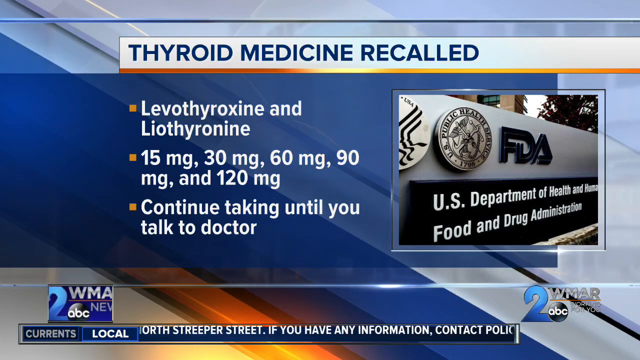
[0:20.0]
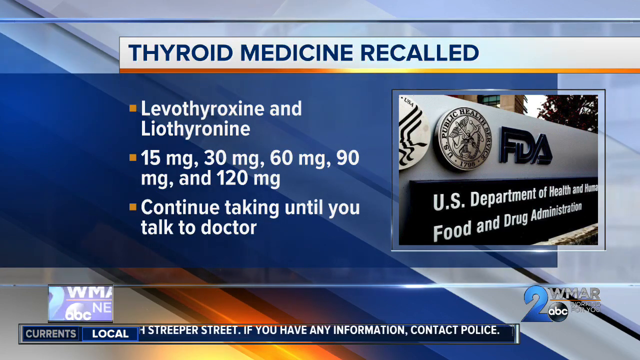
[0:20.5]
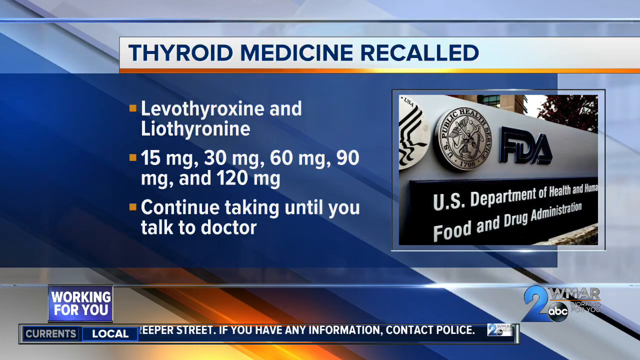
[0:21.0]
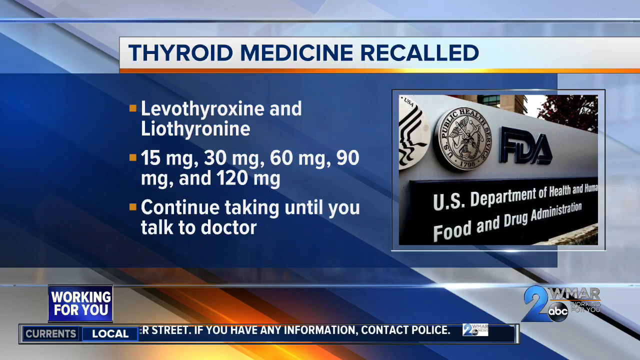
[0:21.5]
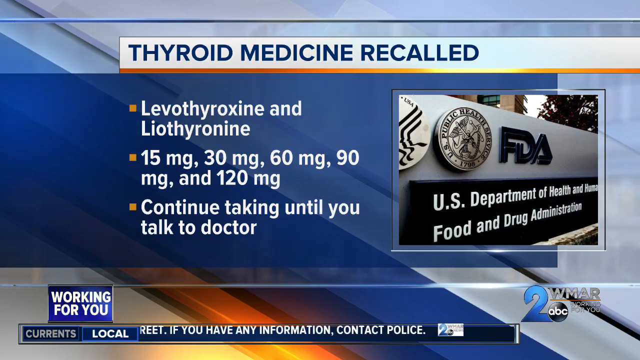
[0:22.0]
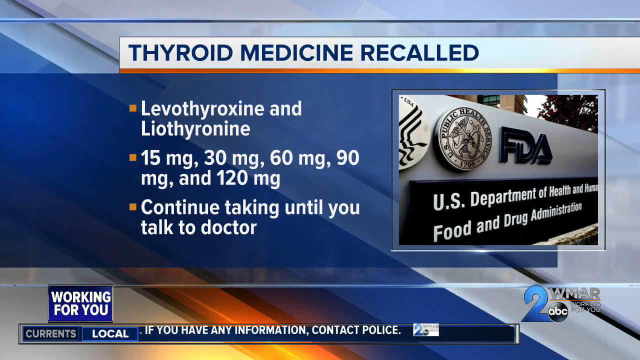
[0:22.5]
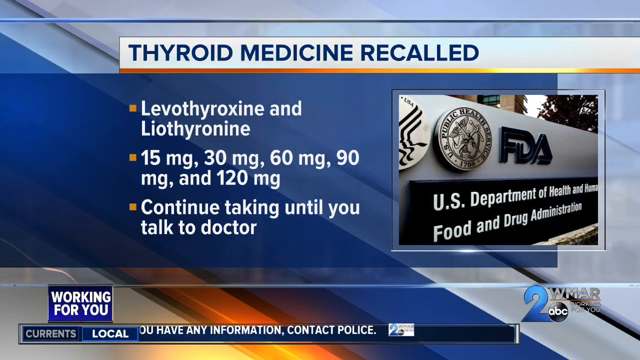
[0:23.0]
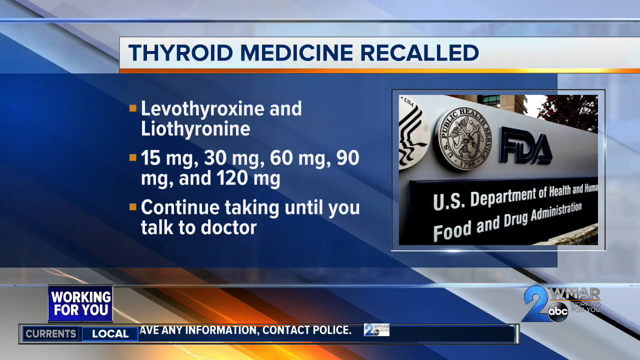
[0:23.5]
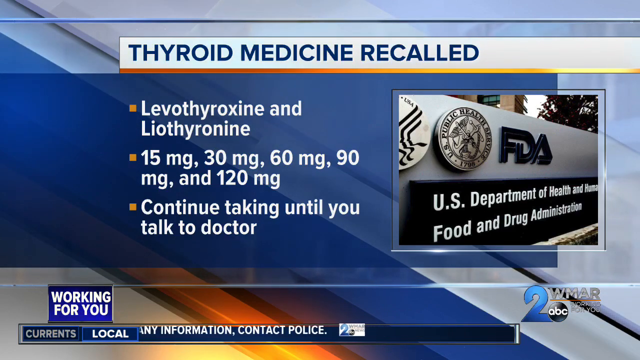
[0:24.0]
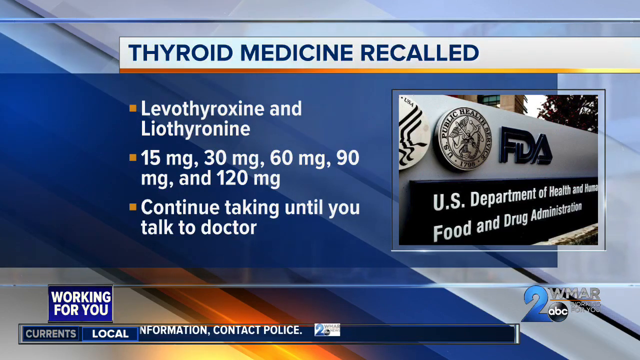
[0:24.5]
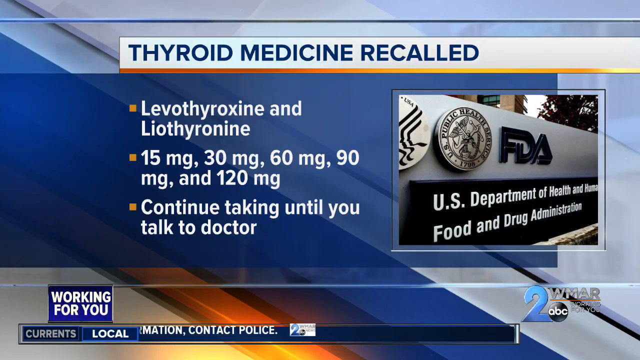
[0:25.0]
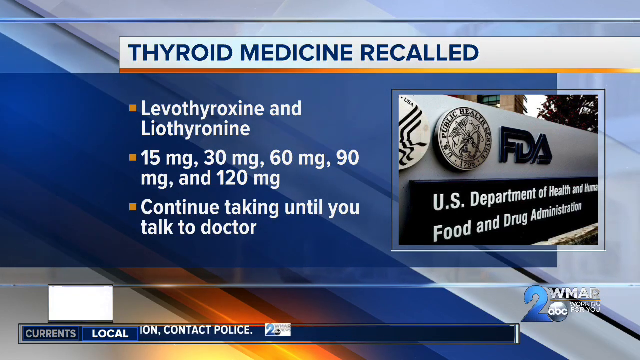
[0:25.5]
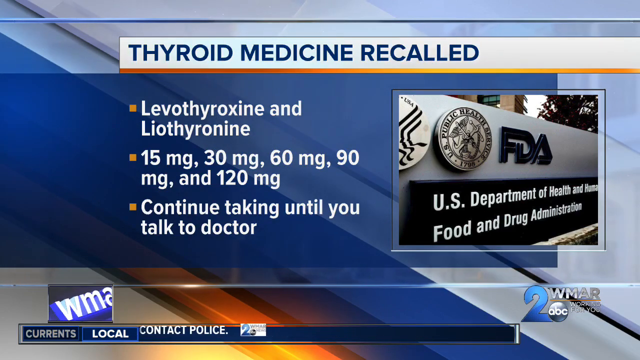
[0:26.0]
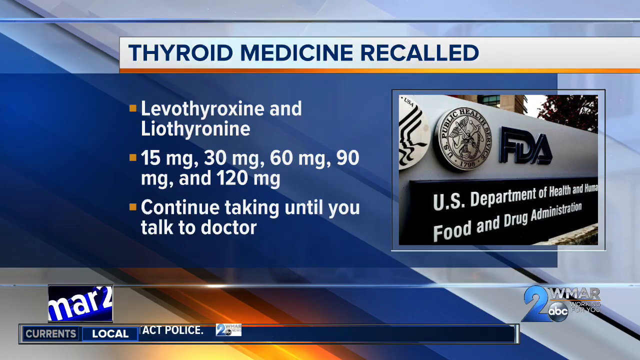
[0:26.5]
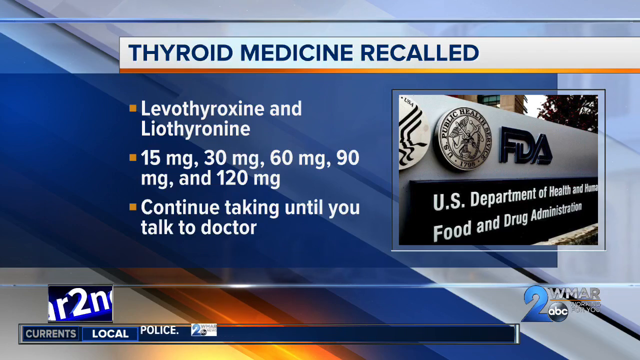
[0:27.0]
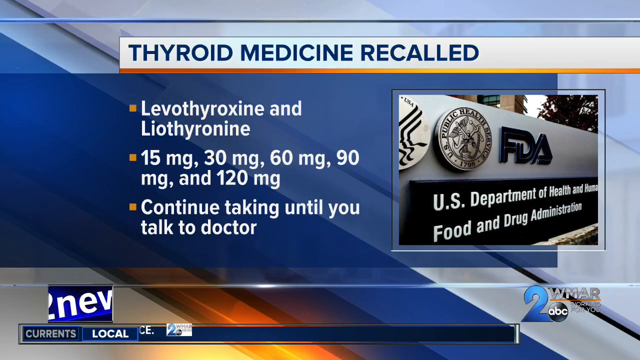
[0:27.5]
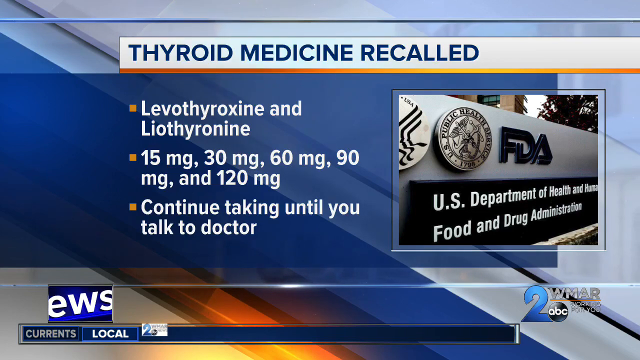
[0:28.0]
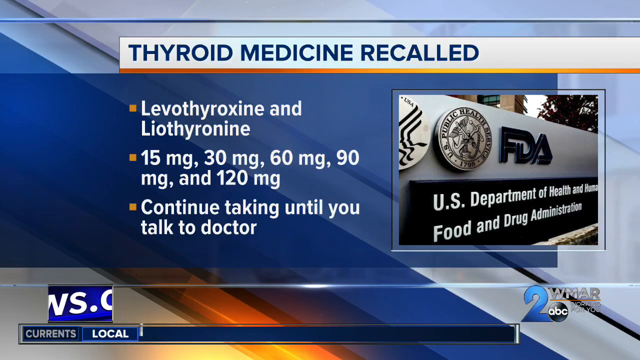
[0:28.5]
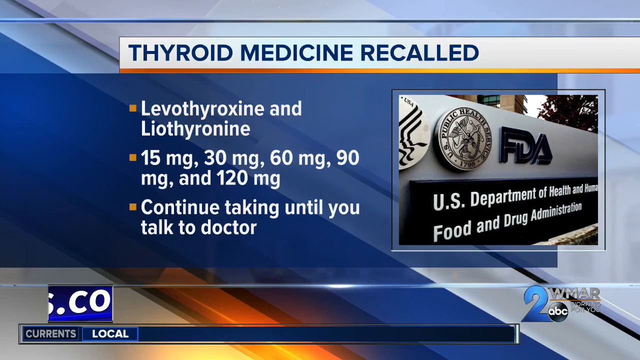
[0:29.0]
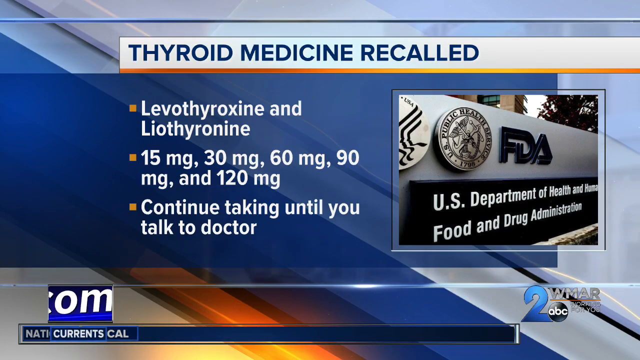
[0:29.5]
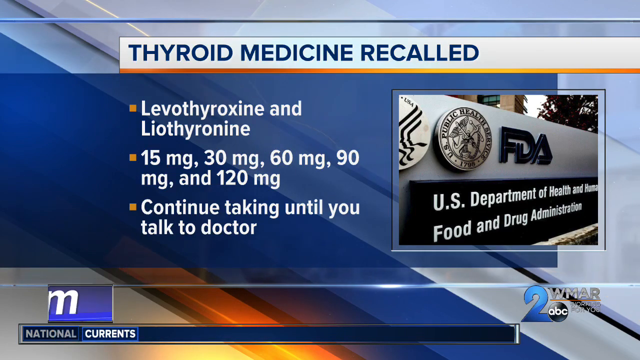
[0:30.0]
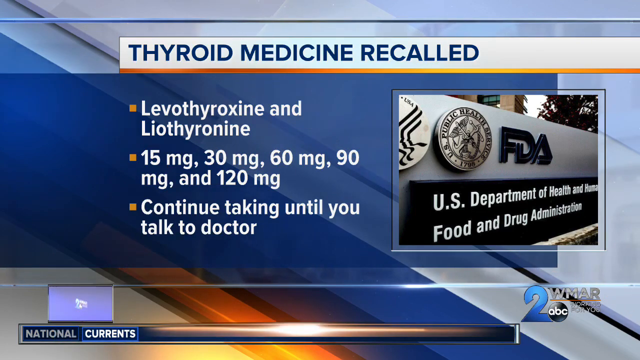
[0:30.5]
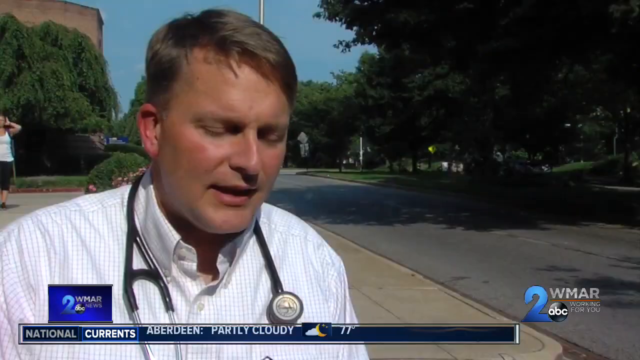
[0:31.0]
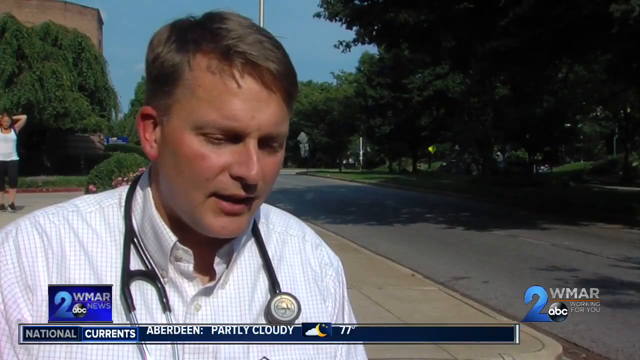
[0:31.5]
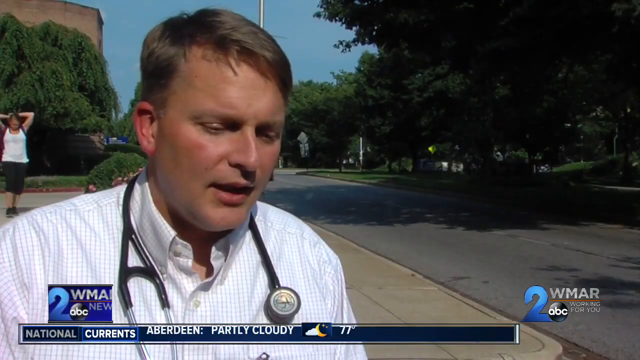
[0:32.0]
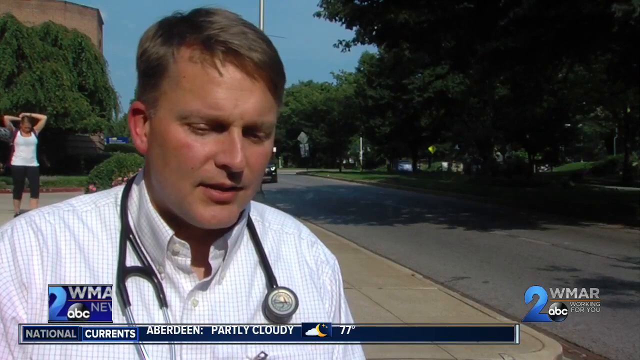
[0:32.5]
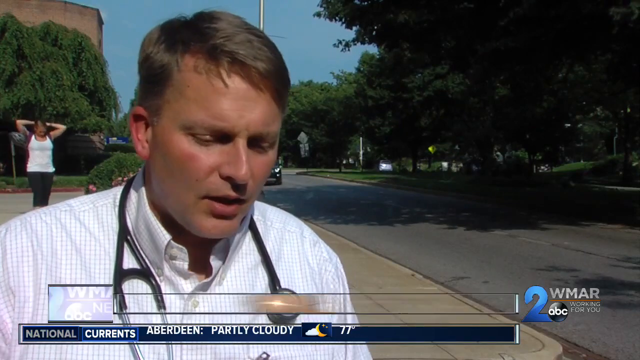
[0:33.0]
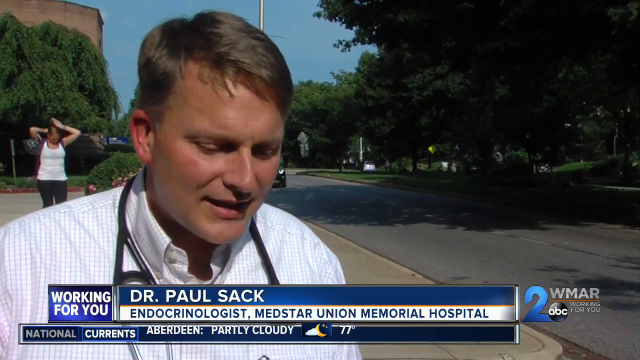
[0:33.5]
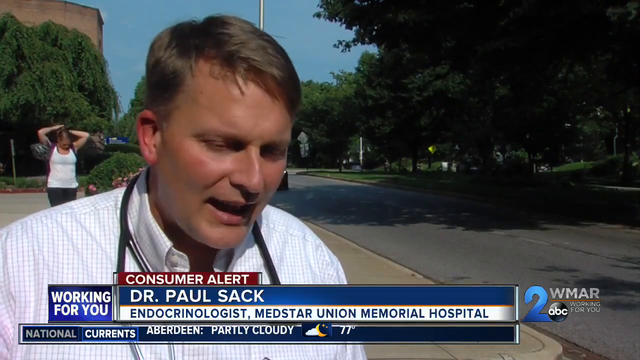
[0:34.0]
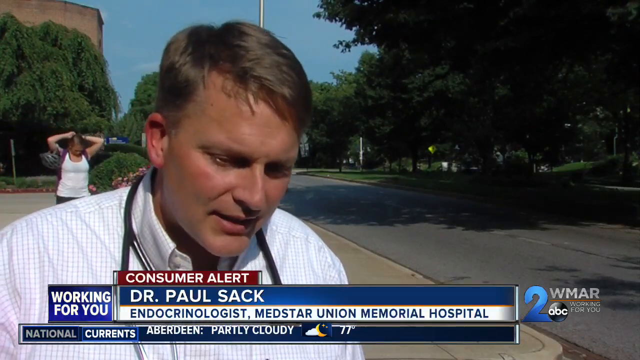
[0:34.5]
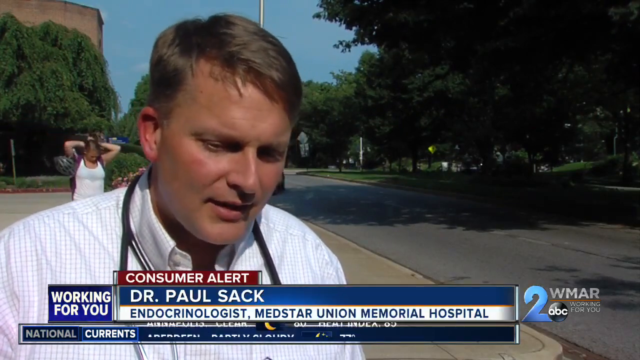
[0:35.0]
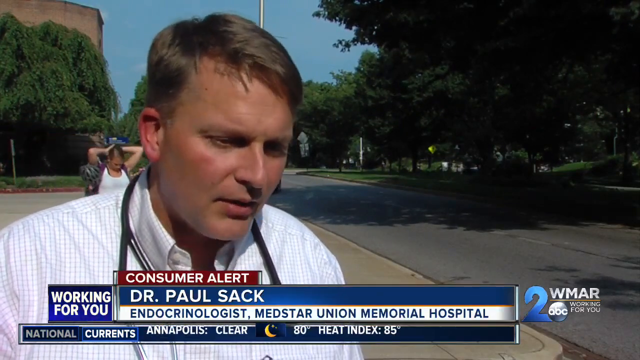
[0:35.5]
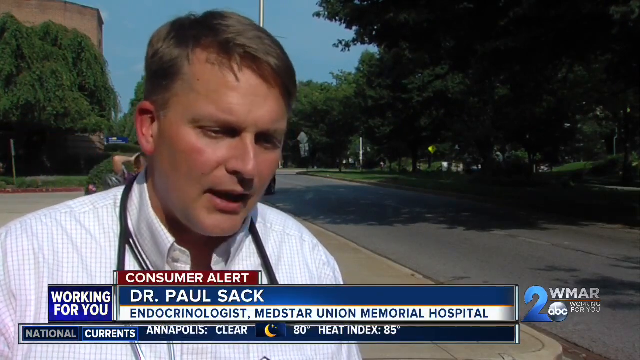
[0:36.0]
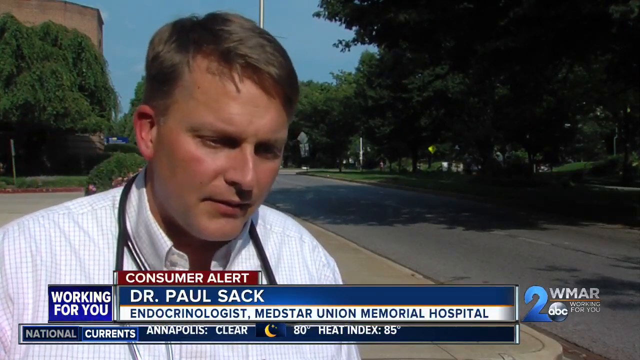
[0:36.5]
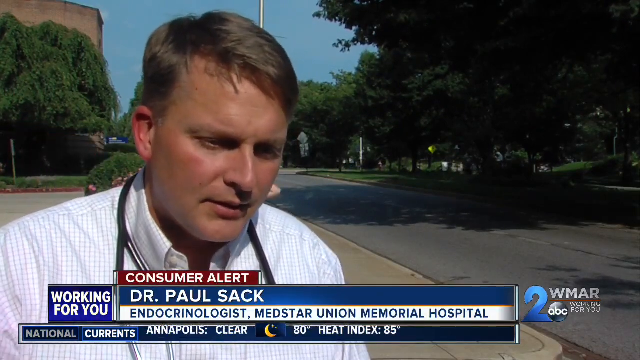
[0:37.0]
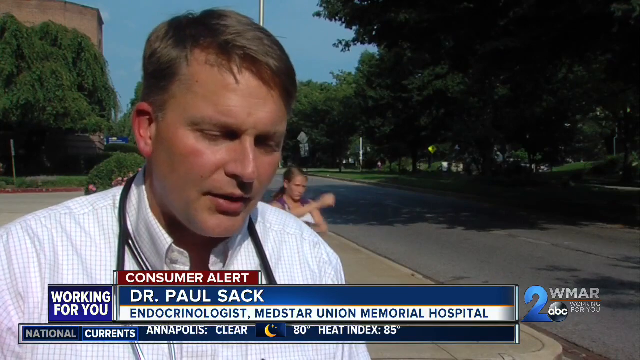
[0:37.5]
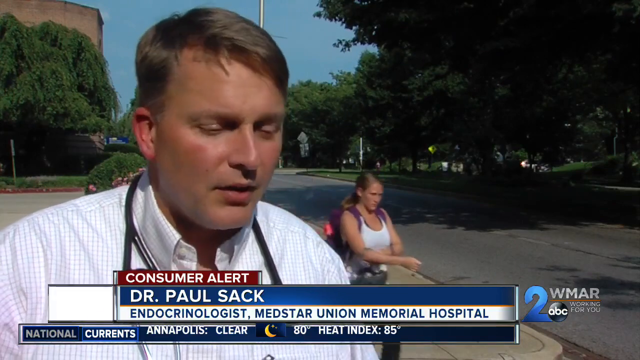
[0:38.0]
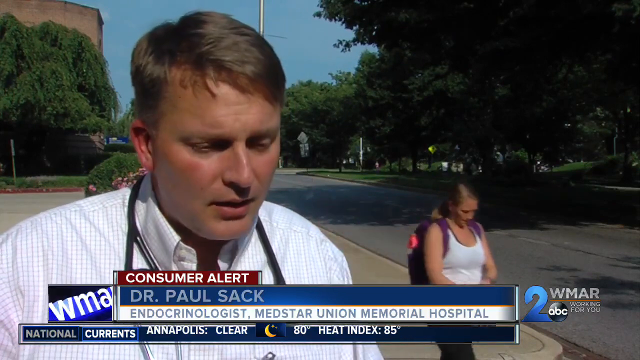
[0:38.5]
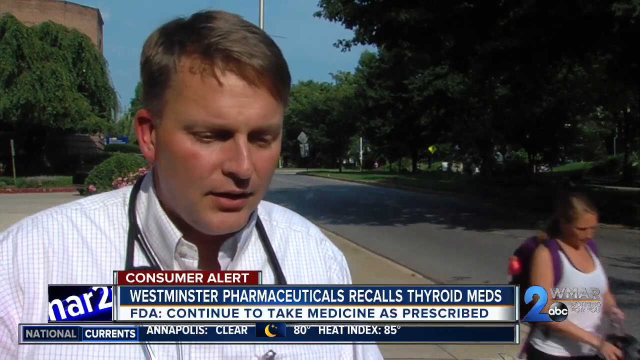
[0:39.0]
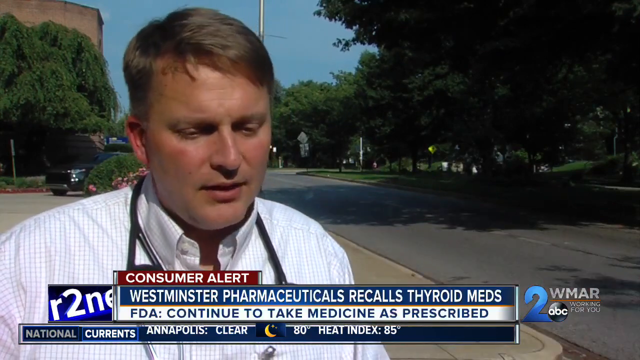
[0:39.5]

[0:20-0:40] In this WMAR2 ABC News consumer alert about a thyroid medicine recall, a screen lists the medication and the dosages being recalled, and advises continuing to take it until you talk to your doctor. An image shows the outside of the FDA, the U.S. Food and Drug Administration. Outside, a doctor identified as Dr. Paul Sack, endocrinologist, MedStar Union Memorial Hospital, is interviewed; he has a stethoscope around his neck and speaks to a reporter. The medicine is from Westminster Pharmaceuticals, and the FDA advises those taking it to continue taking the medication as prescribed.